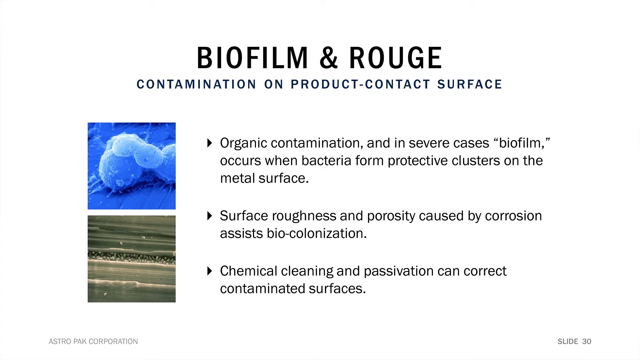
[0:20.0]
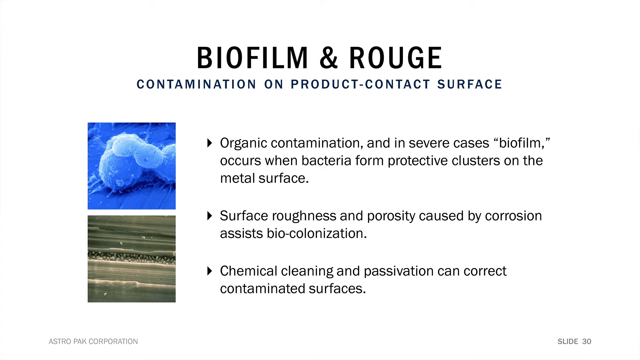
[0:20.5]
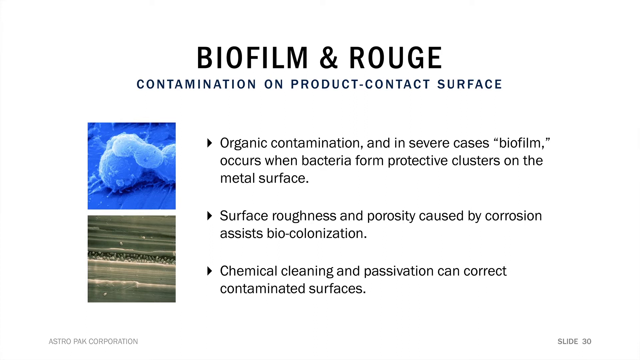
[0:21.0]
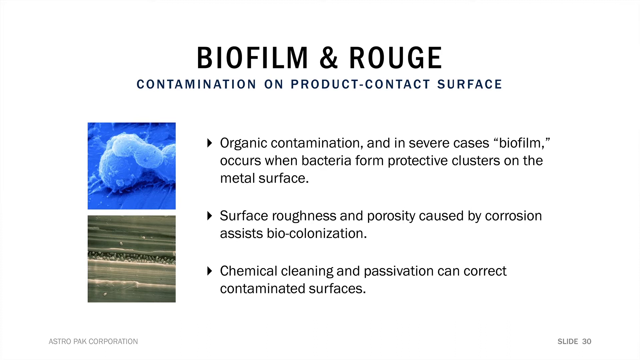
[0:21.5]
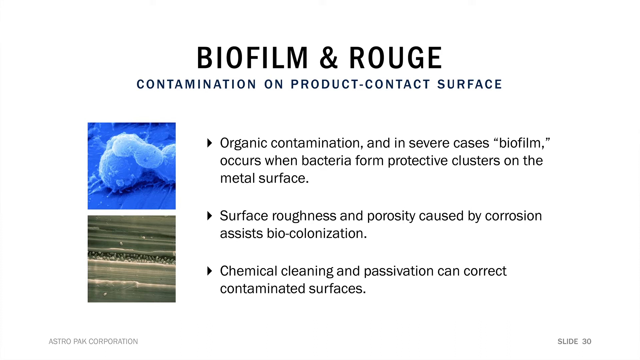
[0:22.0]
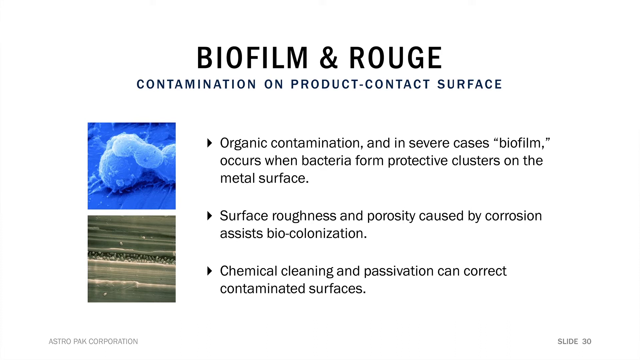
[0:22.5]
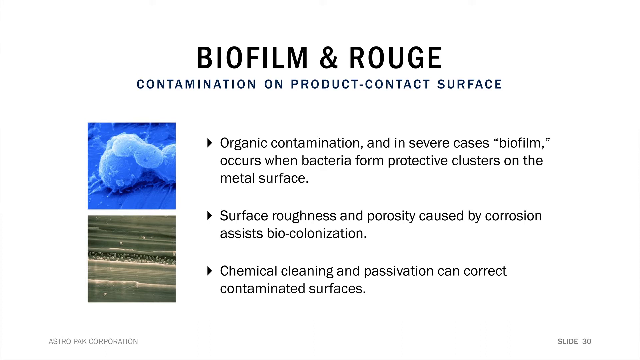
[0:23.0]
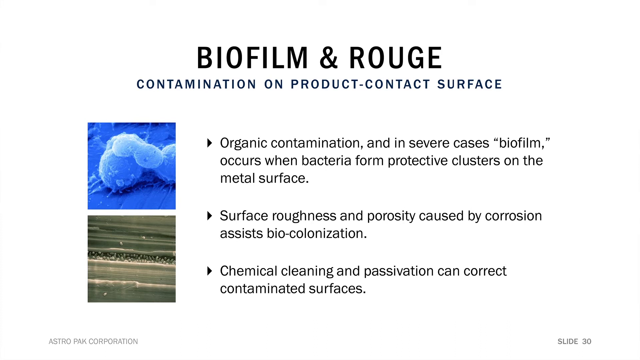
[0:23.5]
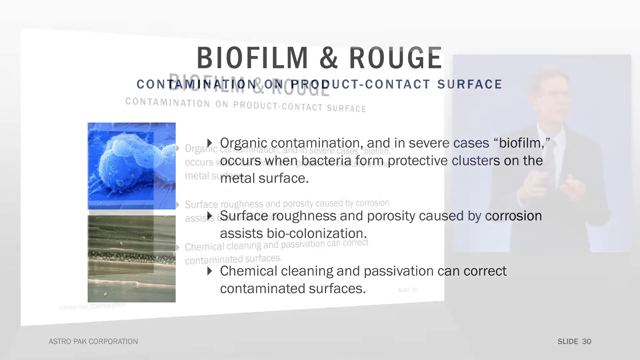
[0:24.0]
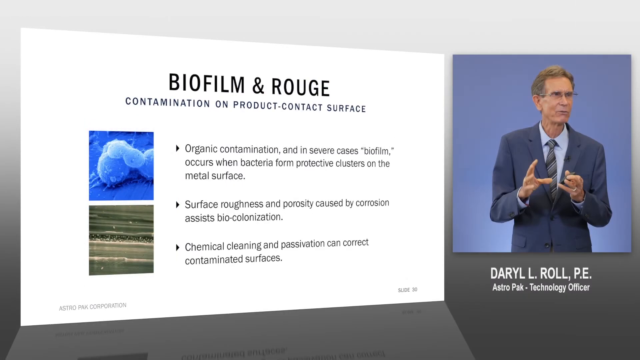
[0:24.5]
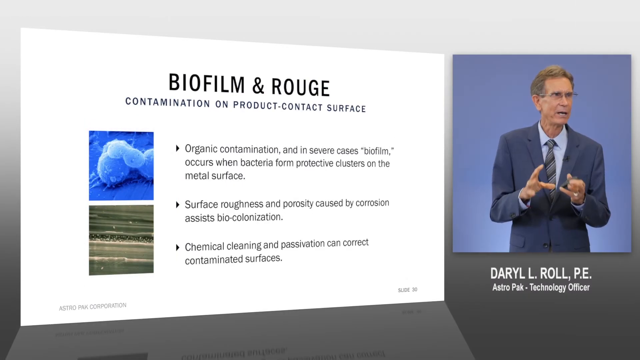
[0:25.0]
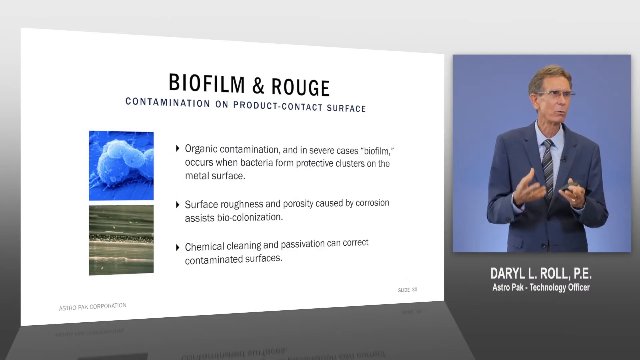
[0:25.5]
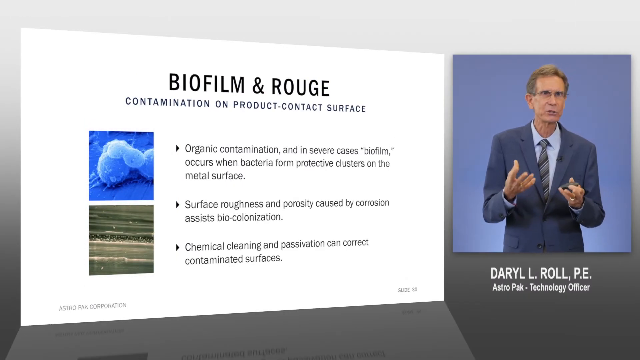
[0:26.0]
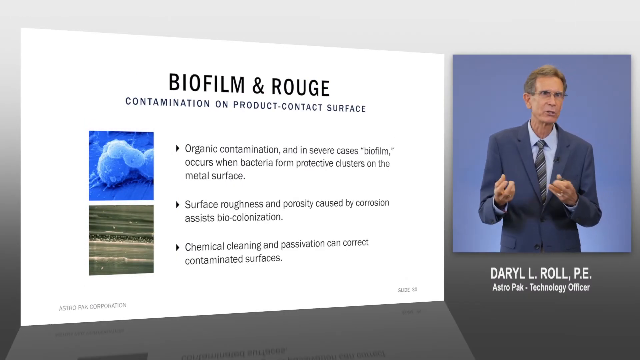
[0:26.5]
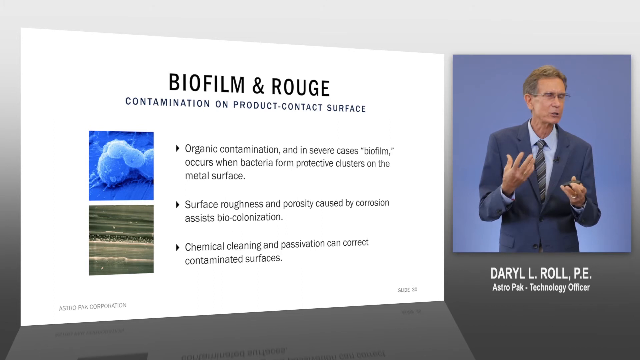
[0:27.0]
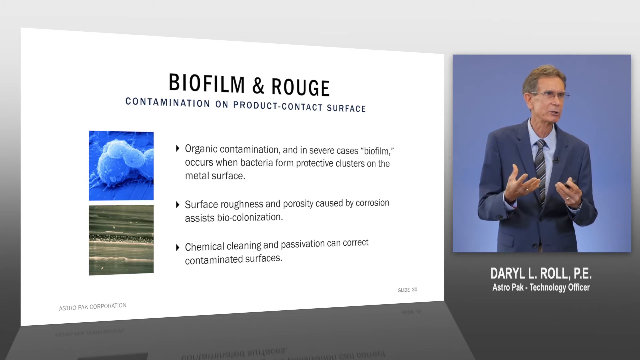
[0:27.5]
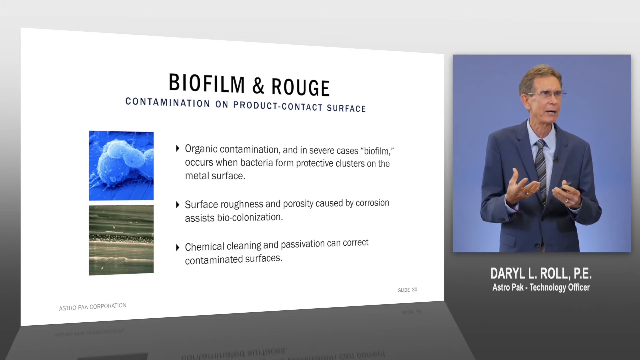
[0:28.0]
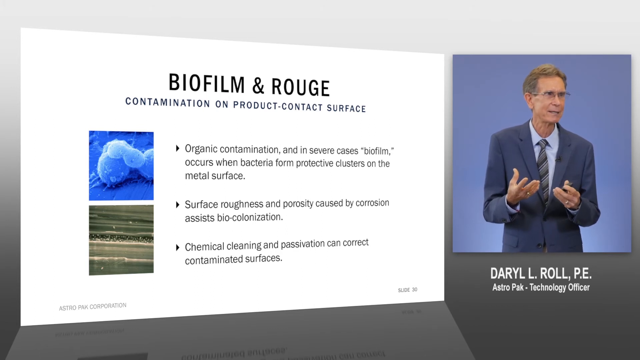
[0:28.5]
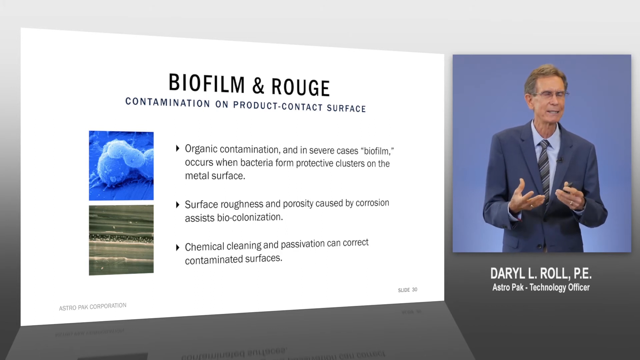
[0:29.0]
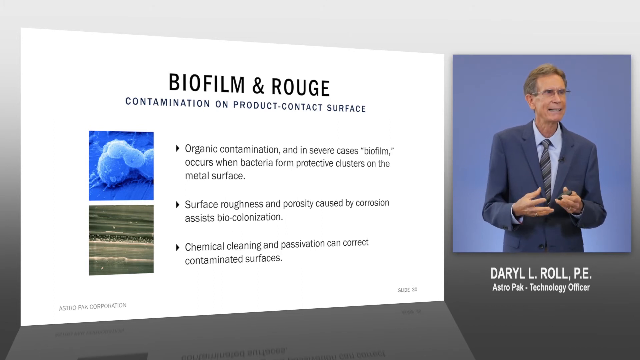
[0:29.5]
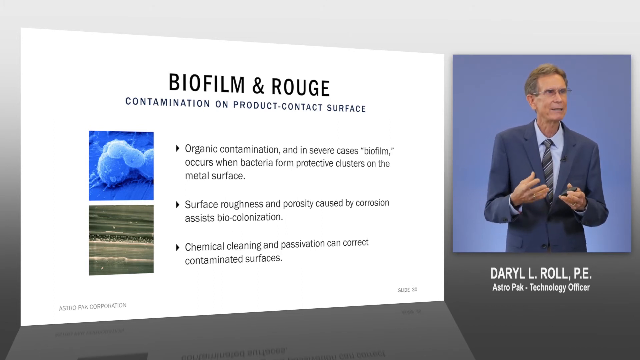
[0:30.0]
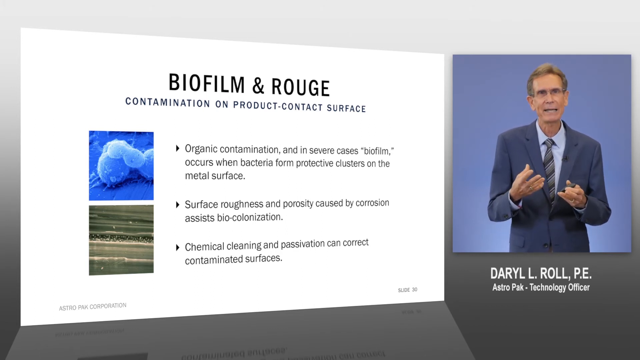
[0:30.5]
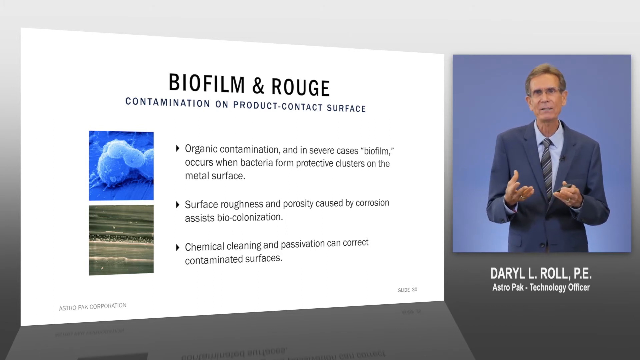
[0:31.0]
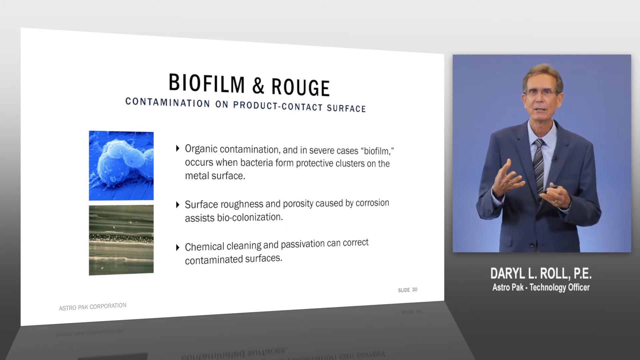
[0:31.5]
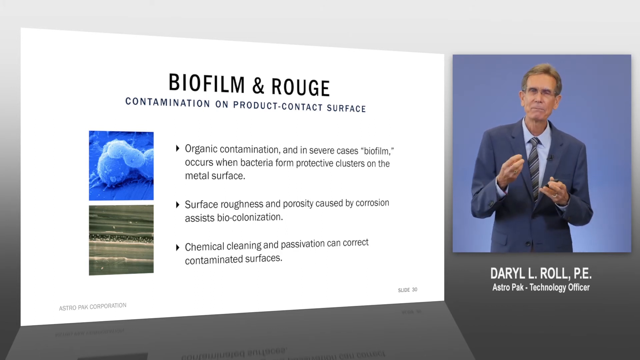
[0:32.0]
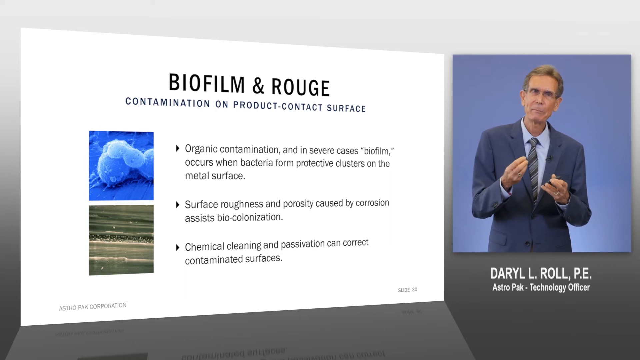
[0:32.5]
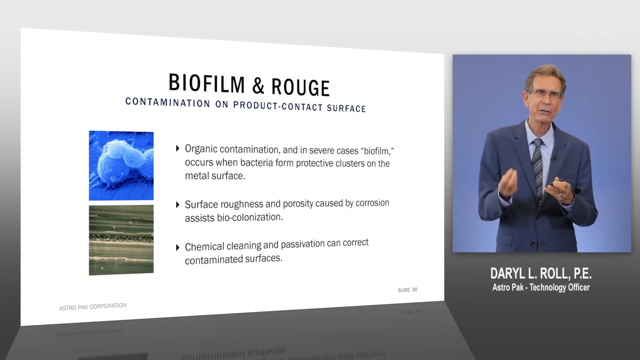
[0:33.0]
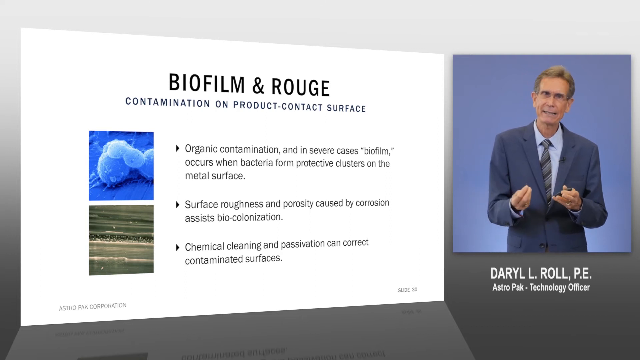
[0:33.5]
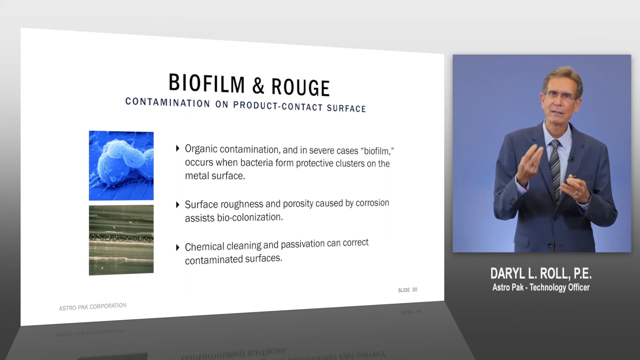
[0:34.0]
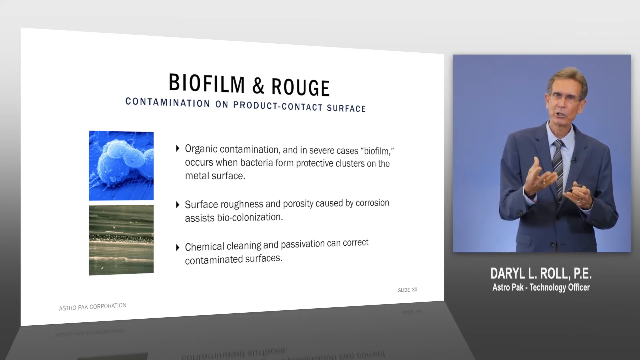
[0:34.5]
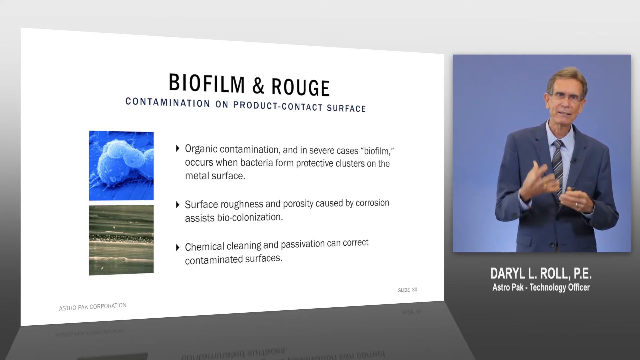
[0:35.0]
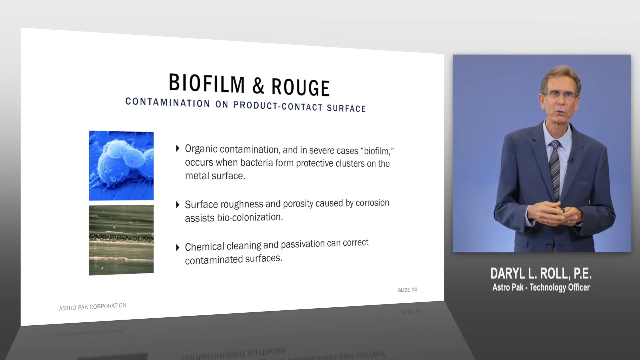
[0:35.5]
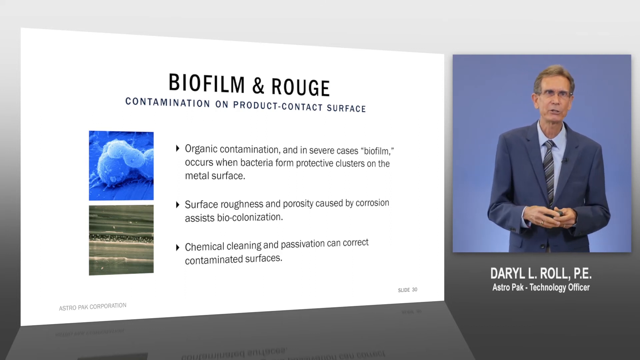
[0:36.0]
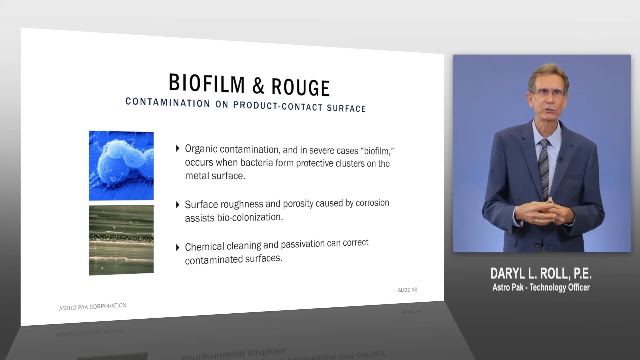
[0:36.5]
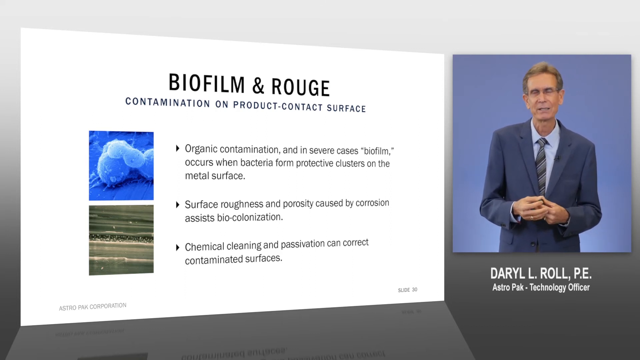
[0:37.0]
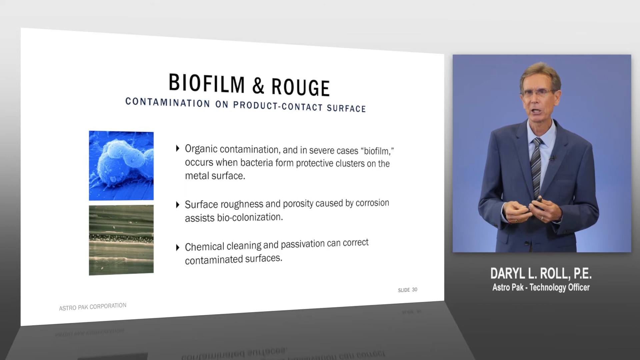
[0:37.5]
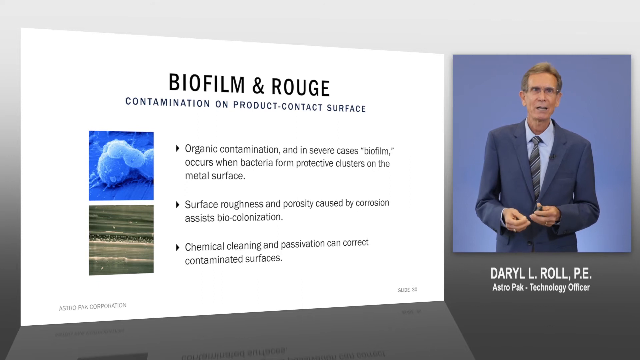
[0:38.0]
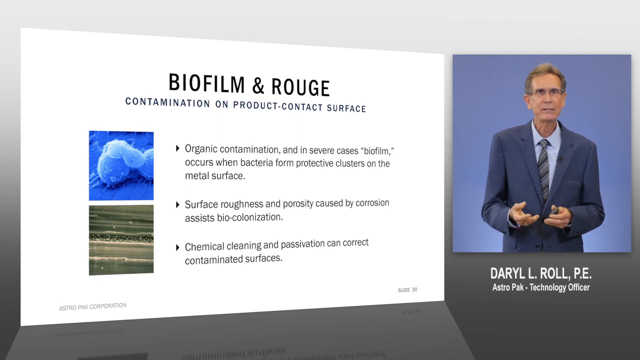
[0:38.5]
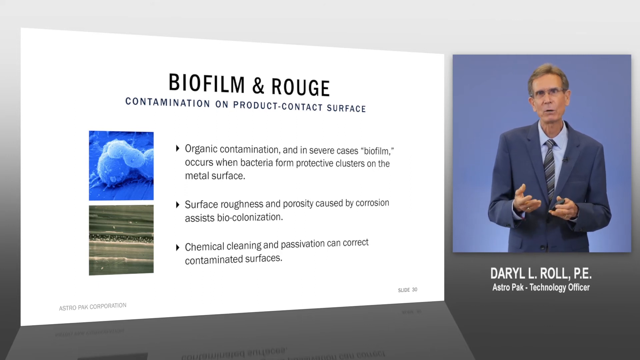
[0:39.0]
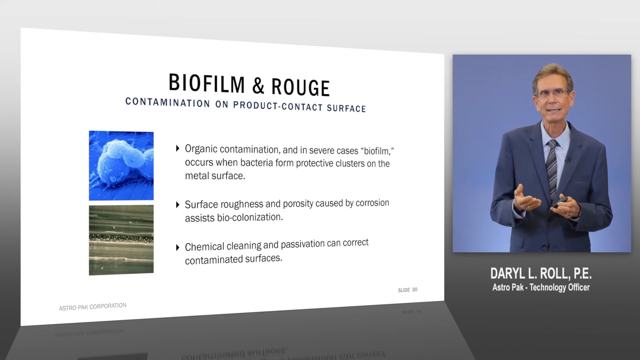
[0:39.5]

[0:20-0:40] Two pictures are shown, one blue and the other looking like grass and dirt. There is a topic written in black, bold font, and another line of text mentioning contamination and contact surfaces. The background is white. A man in formal clothing appears on the right side of the screen, apparently discussing something.